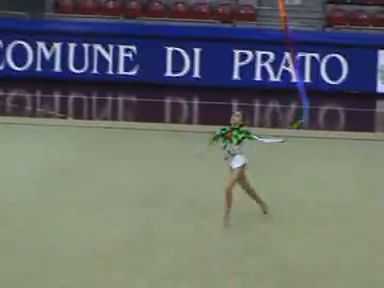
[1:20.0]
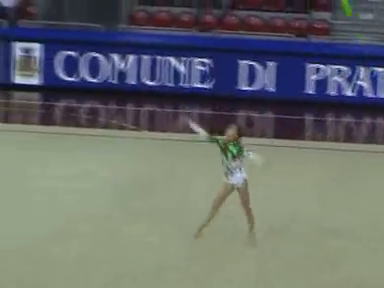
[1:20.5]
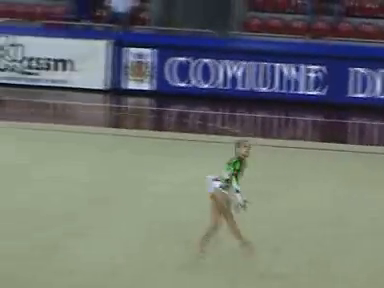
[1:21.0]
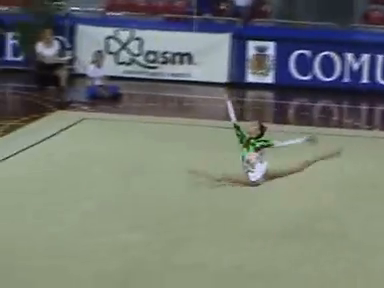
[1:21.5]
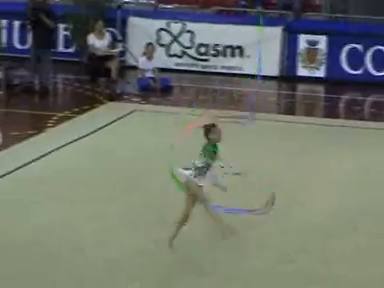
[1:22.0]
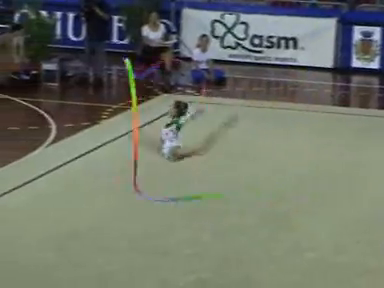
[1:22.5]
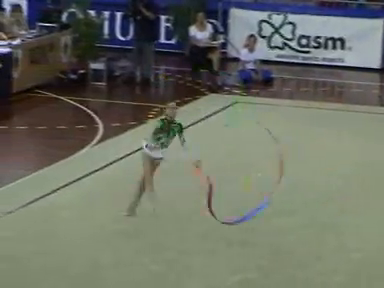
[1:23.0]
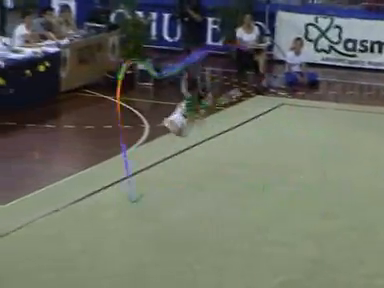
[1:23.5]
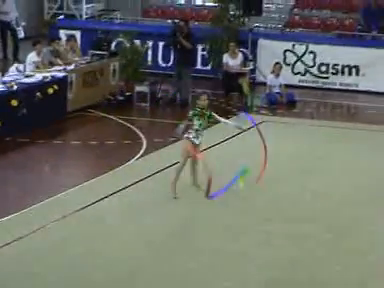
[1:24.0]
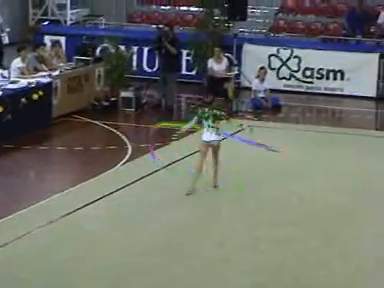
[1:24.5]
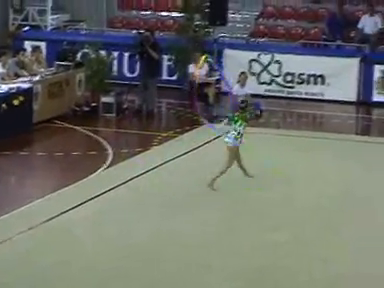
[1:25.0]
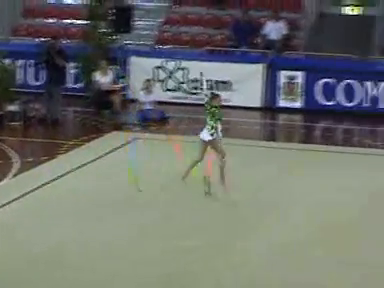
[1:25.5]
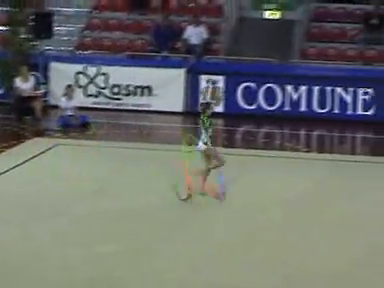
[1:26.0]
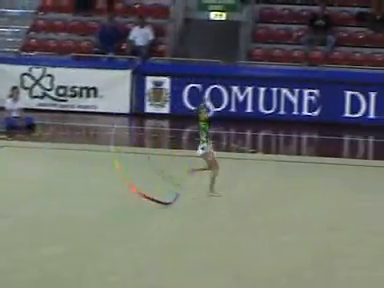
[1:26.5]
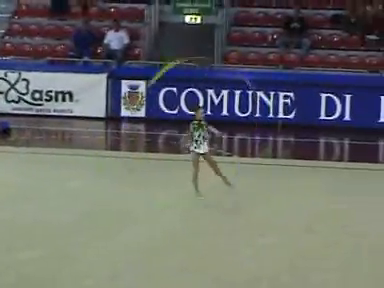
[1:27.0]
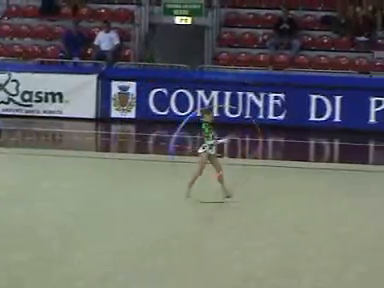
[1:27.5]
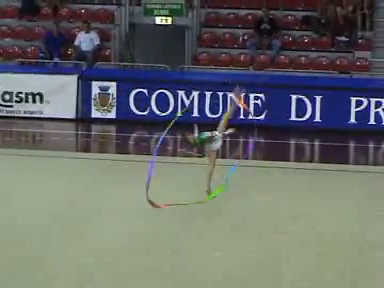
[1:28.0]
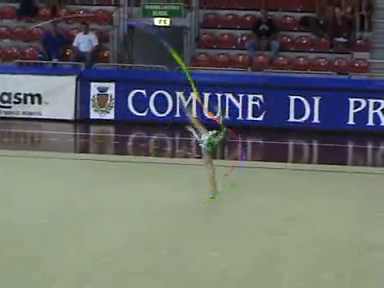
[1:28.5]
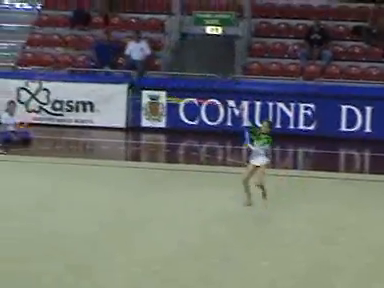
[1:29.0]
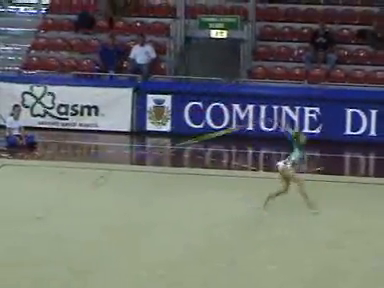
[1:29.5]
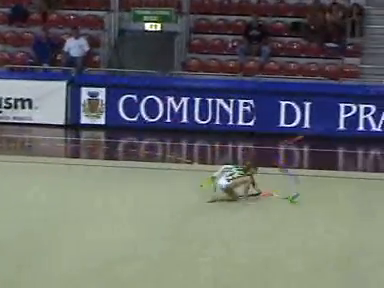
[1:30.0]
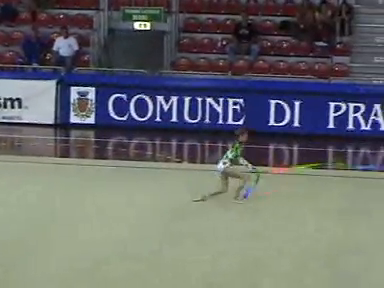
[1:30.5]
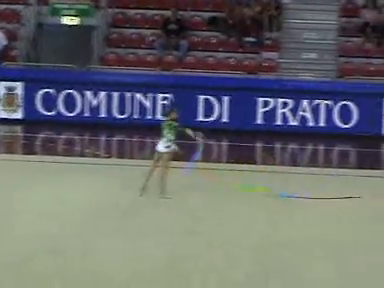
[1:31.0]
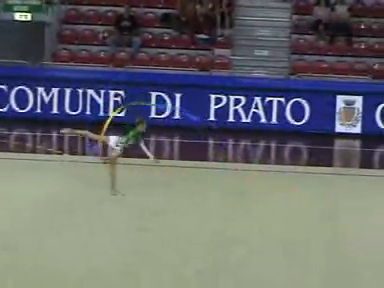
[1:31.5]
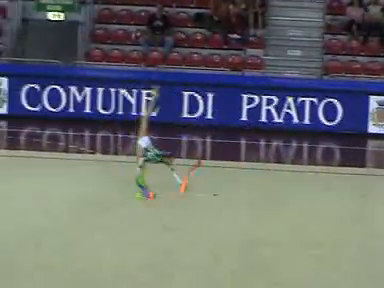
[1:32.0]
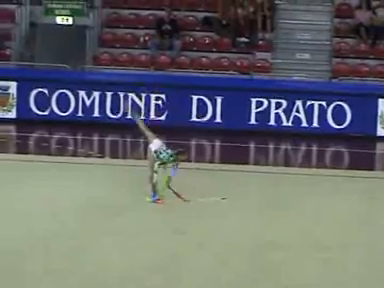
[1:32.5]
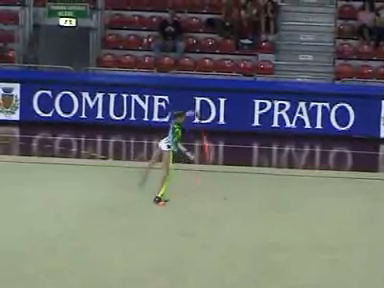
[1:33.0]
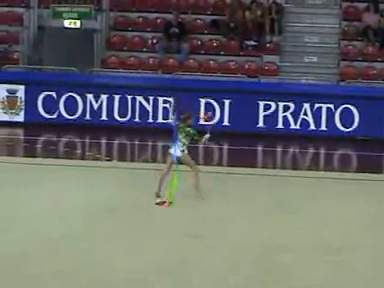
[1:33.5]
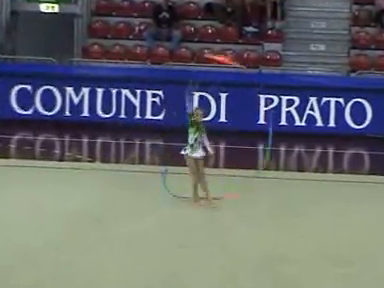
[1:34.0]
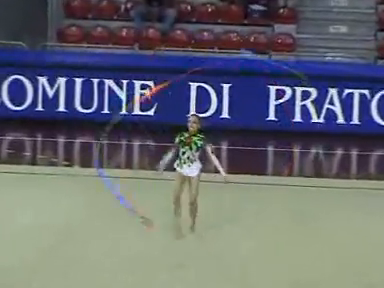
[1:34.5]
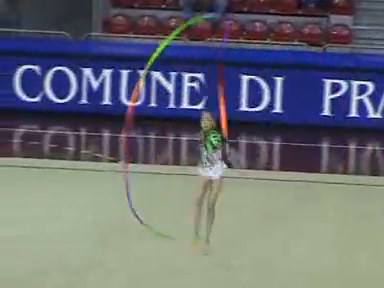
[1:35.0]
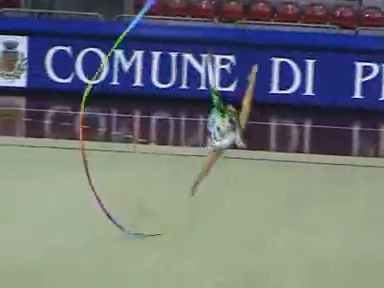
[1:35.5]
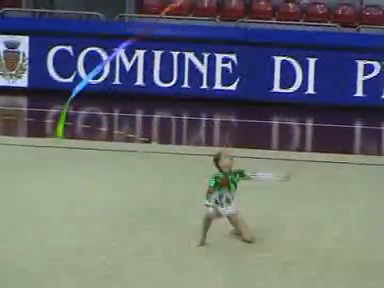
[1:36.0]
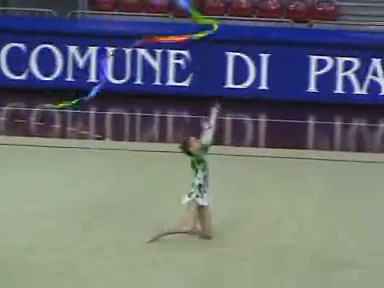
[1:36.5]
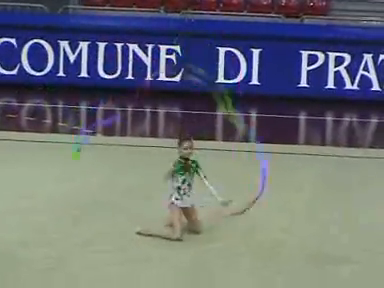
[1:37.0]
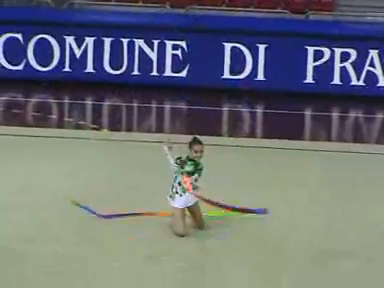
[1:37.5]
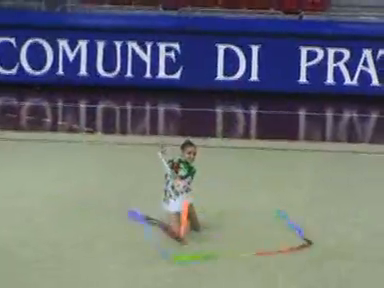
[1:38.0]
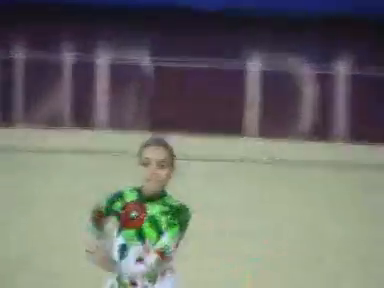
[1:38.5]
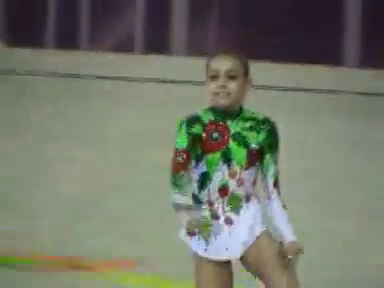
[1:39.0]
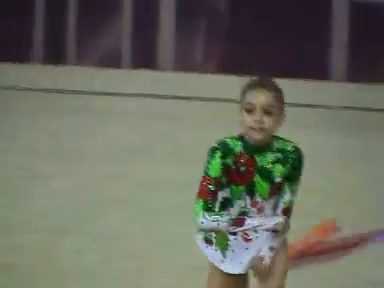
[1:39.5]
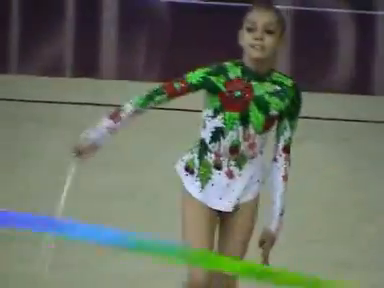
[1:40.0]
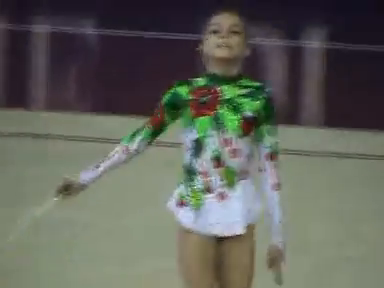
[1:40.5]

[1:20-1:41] The camera pans to the far left of the scene, showing another table of people seated and watching, and another potted plant, like a miniature tree. The girl throws the ribbon up and lets it touch the ground, then throws herself down to her knees, does a flourish and rises as if finished. The camera freezes there, ending on a blurry shot of her standing with the ribbon in her right hand. In this frame she is wearing a white long-sleeved tunic embroidered with what are perhaps green leaves and a floral pattern of blooms, in red, green and white.